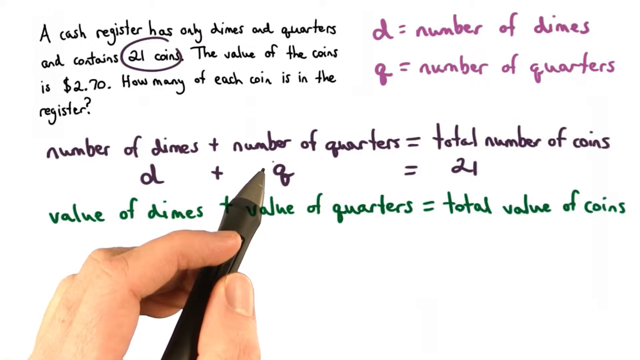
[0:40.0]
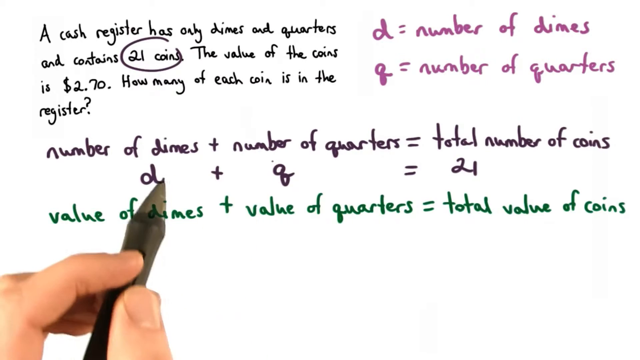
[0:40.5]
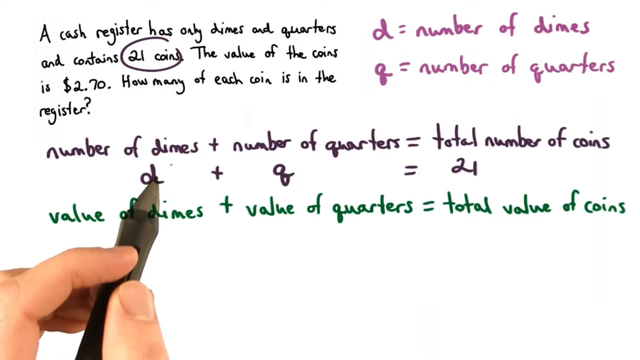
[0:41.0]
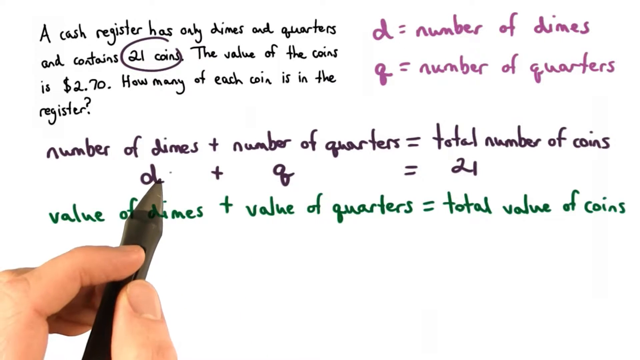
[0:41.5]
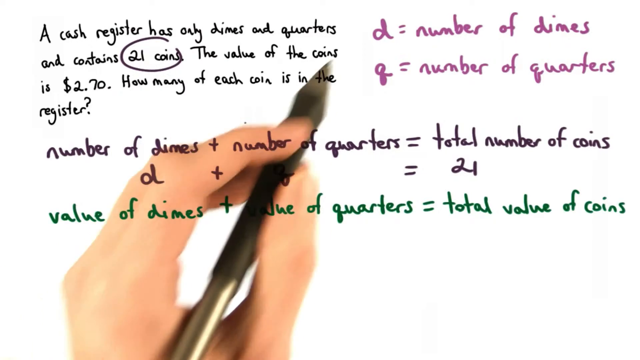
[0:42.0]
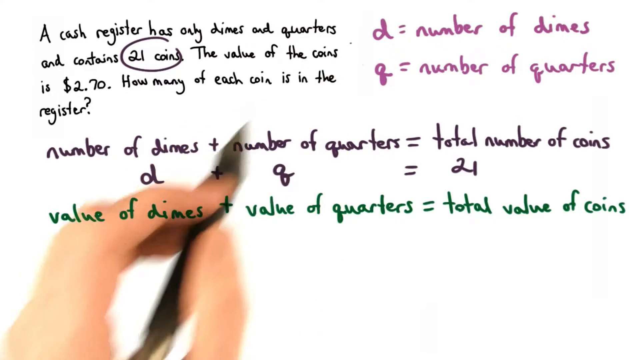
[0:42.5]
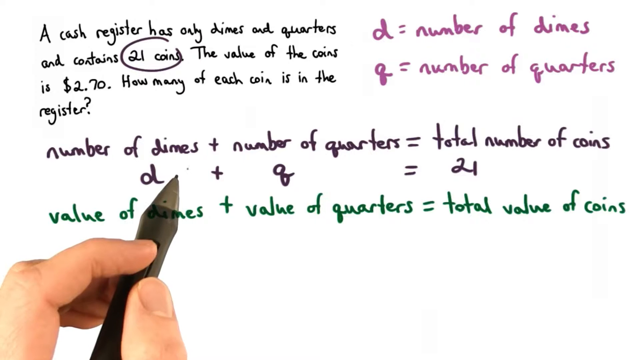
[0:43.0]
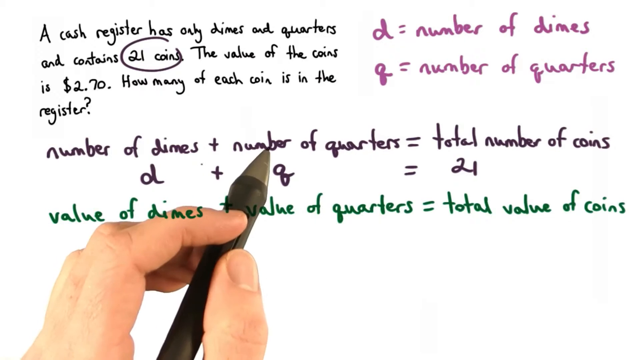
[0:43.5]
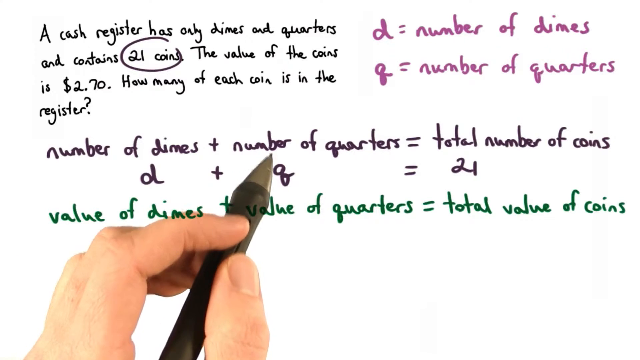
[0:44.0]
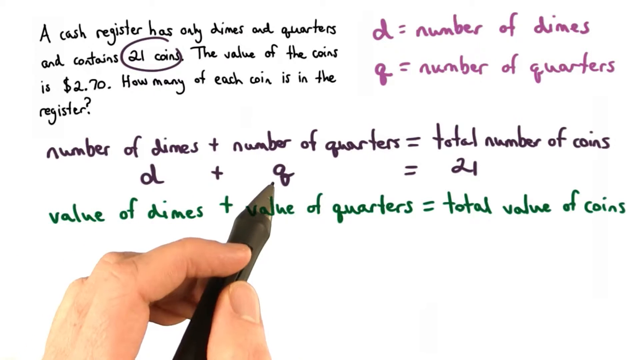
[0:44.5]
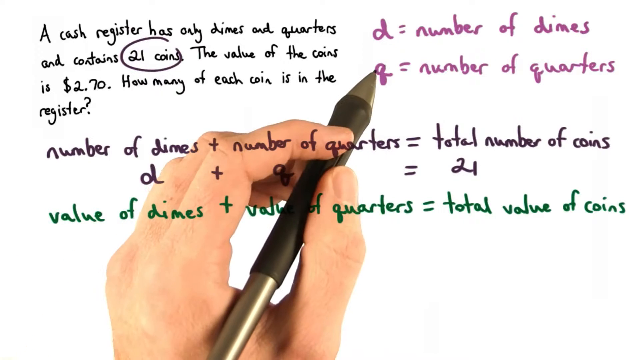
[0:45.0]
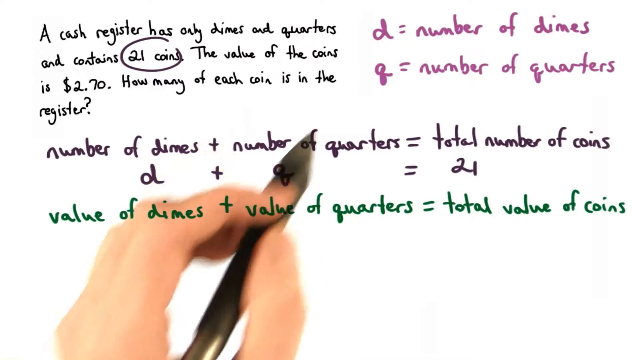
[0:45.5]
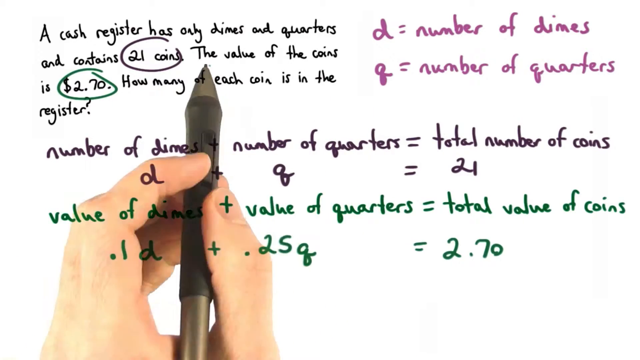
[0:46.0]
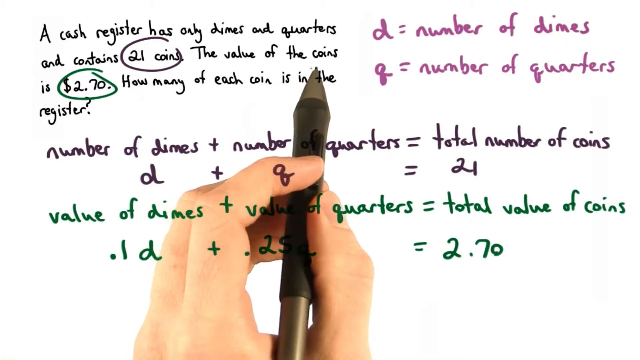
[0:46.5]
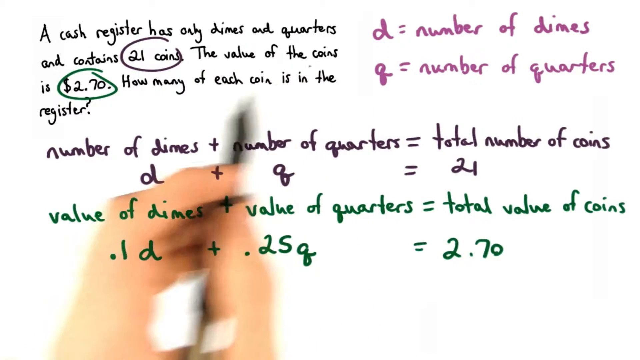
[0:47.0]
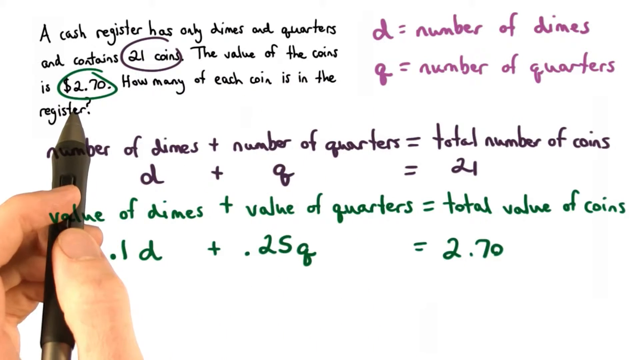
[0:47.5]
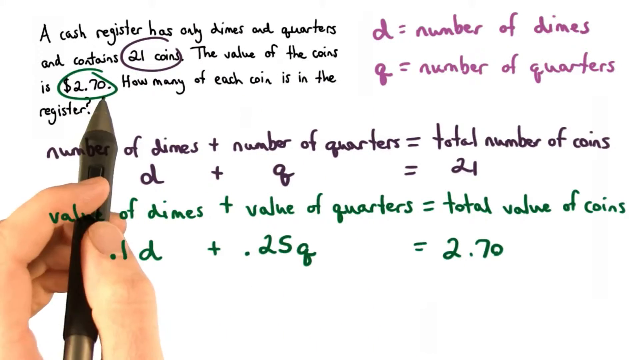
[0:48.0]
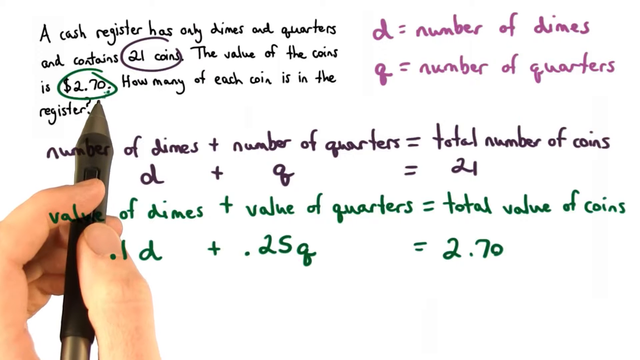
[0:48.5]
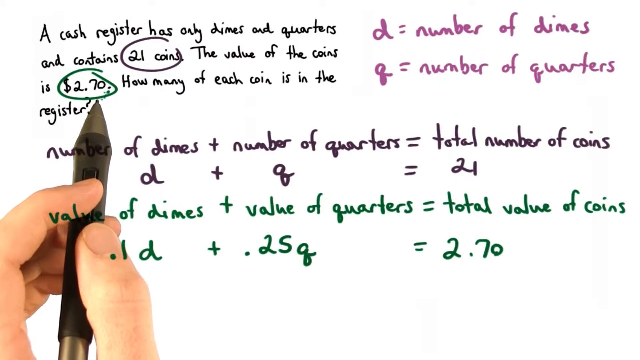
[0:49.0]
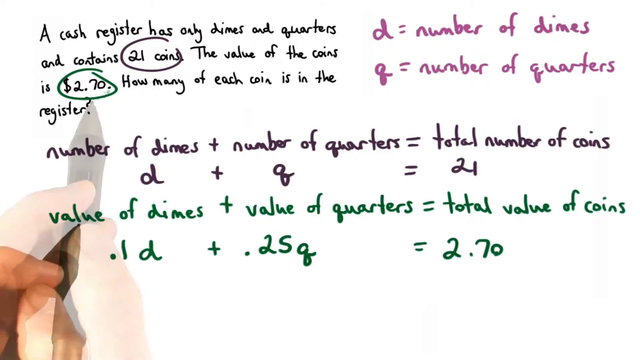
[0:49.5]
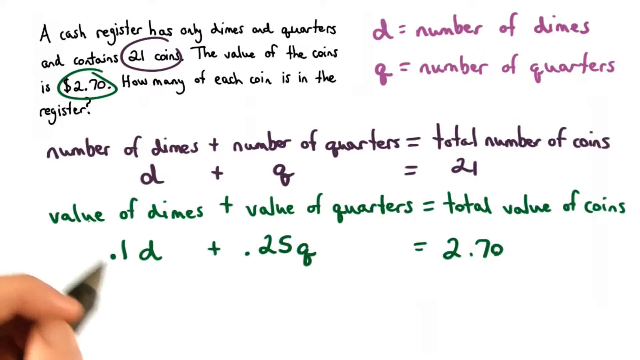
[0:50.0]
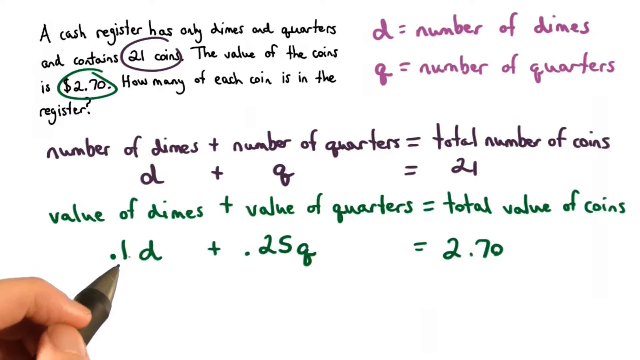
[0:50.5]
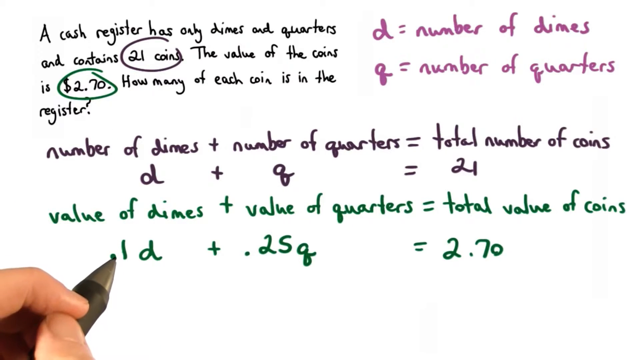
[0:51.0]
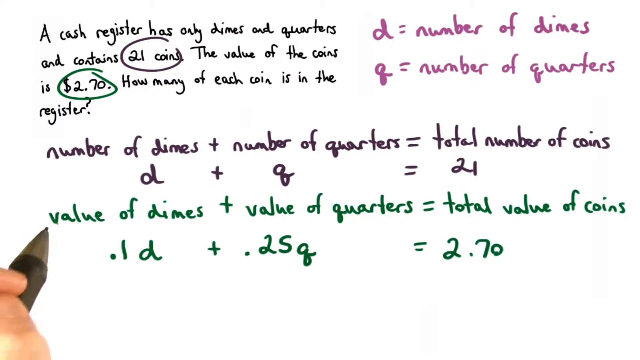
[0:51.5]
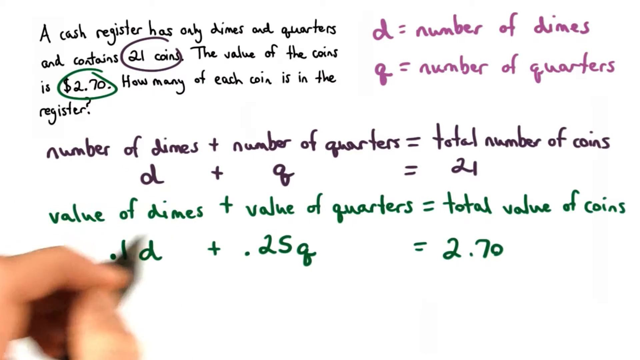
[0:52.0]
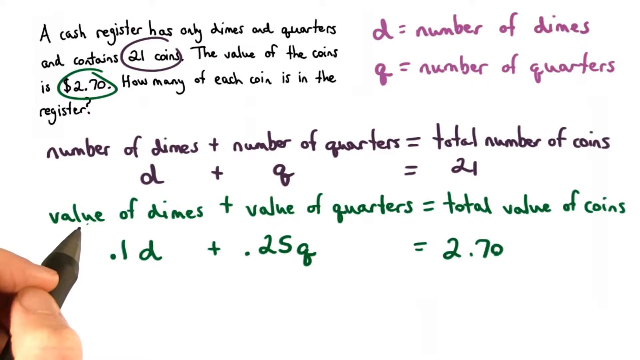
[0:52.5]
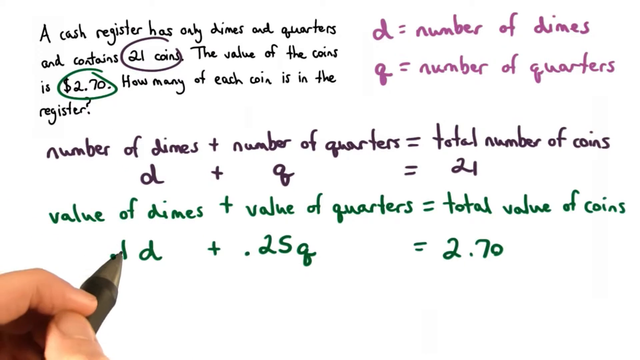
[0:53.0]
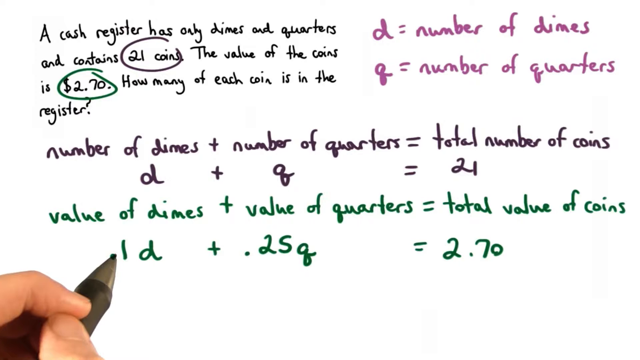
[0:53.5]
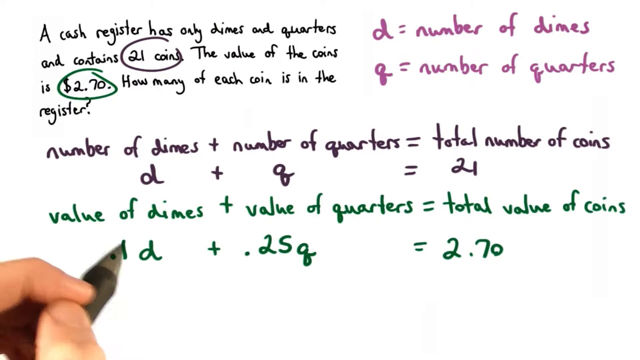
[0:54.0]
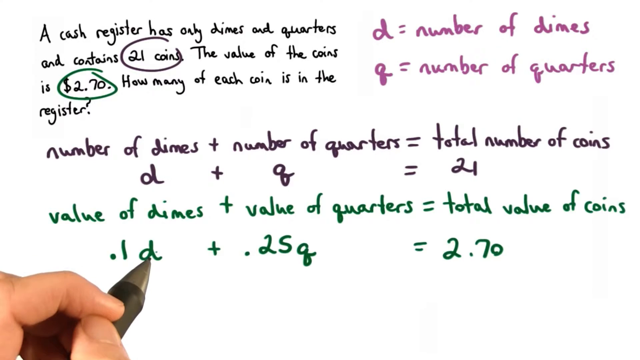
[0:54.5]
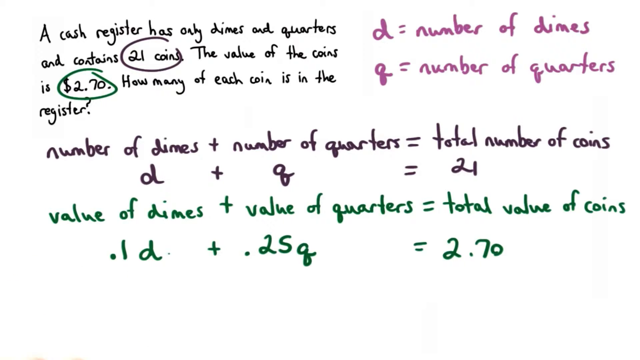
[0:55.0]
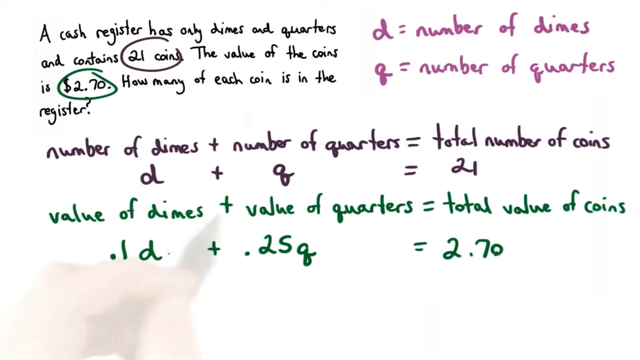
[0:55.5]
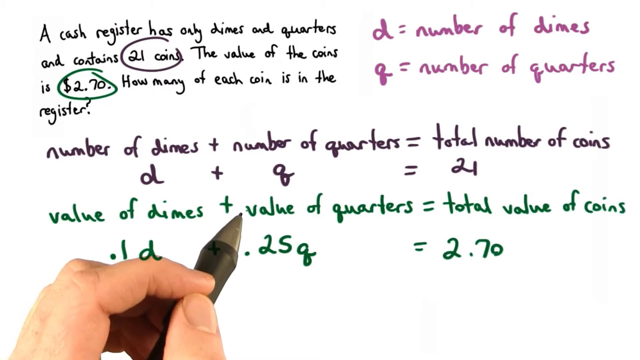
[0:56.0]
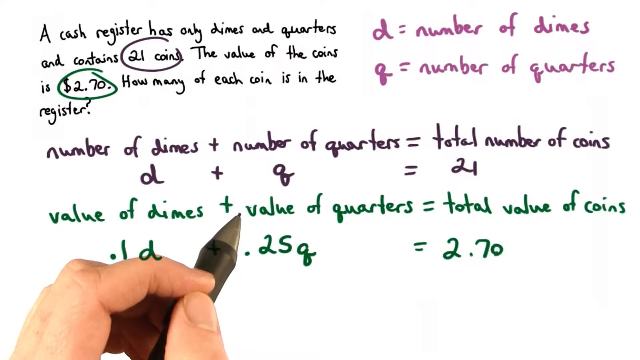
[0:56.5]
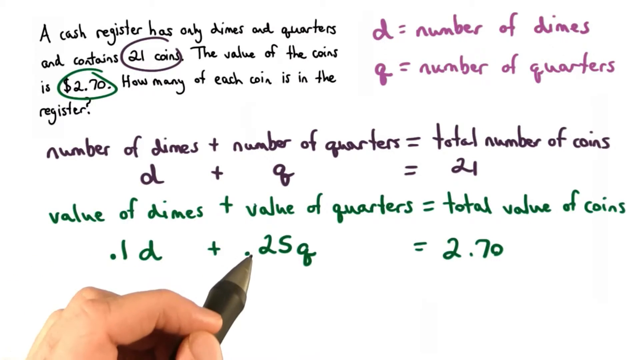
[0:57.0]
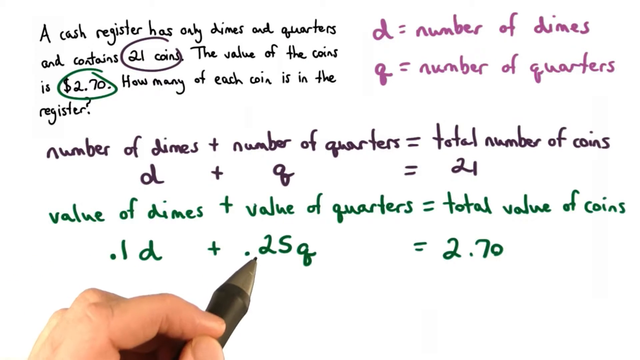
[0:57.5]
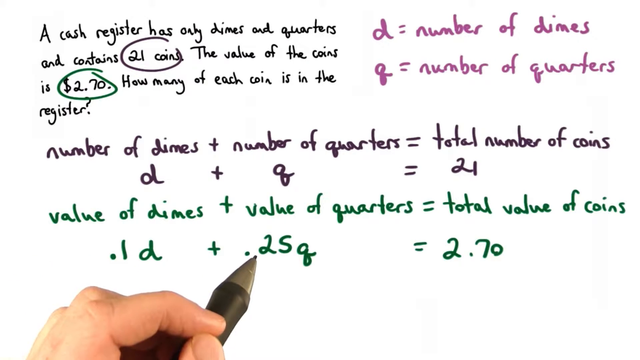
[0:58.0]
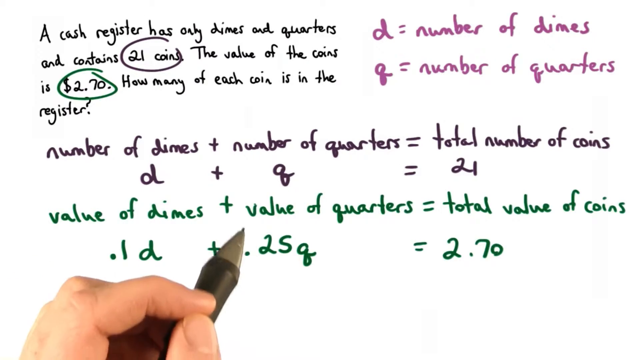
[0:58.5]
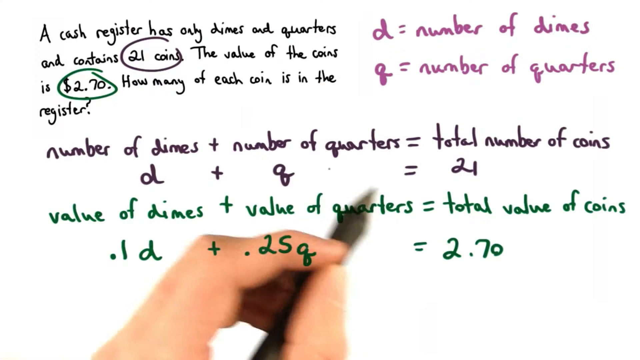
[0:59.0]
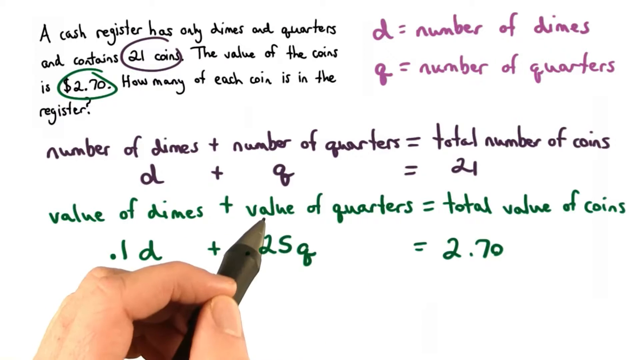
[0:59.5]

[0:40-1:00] The text in the upper left quadrant reads "a cash register has only dimes and quarters and contains 21 coins. The value of the coins is $2.70. How many of each coin is in the register?", all in black, with "21 coins" circled. In the upper right quadrant in purple, all lowercase, are "d = number of dimes" and "q = number of quarters". Across the middle of the screen in black is "number of dimes + number of quarters = total number of coins", with "d + q = 21" beneath it. Beneath that, in green, is "value of dimes + value of quarters = total value of coins". The hand holding the pen comes into frame and points at the q. The pen then points at the d, moves up, points at "number of quarters" and the q, then at the purple q, then moves across the problem and circles "$2.70" in green, staying there. It fades out and reappears at the bottom. Written beneath the green line, also in green, is now "0.1d + 0.25q = 2.70". The pen points at the 0.1d, makes a circular motion around "value of dimes", returns to the 0.1d and emphasizes it, moves to "value of quarters" and then the 0.25q, and makes a circular motion around "value of quarters".